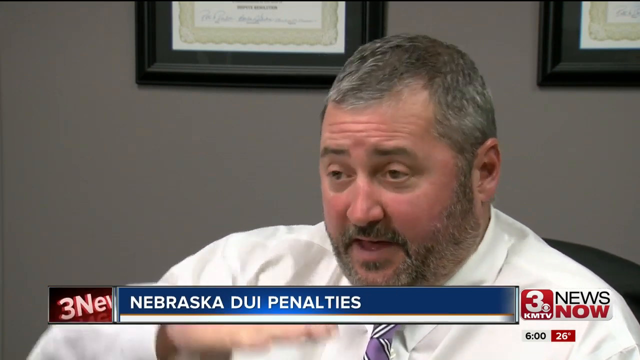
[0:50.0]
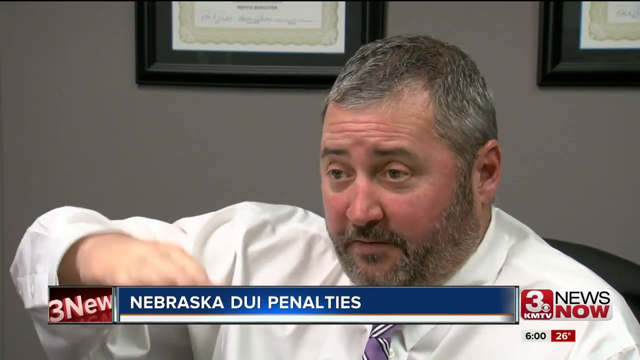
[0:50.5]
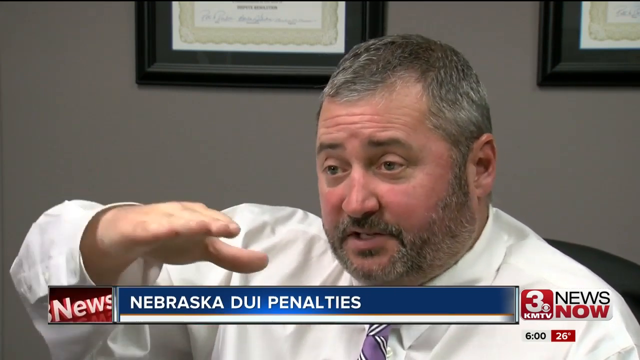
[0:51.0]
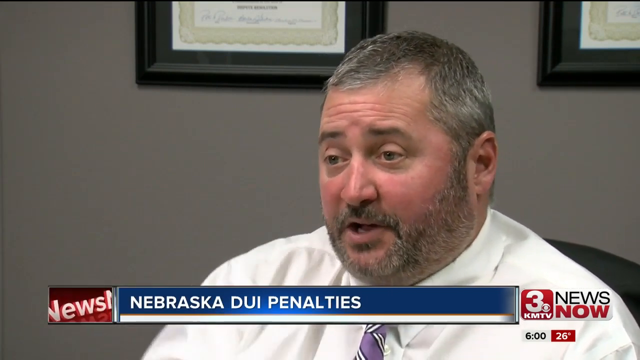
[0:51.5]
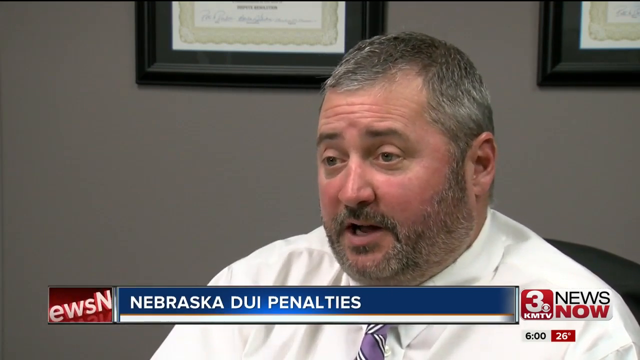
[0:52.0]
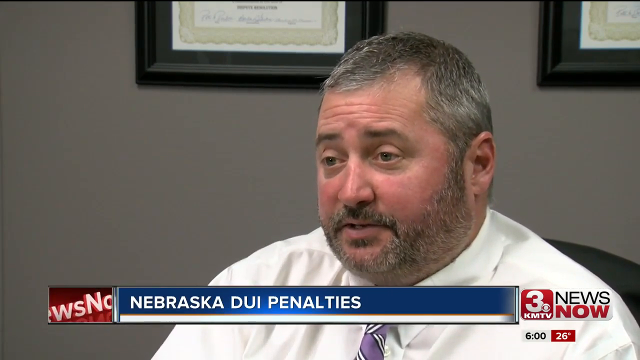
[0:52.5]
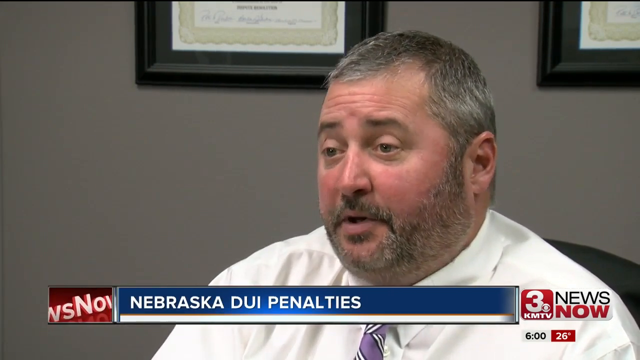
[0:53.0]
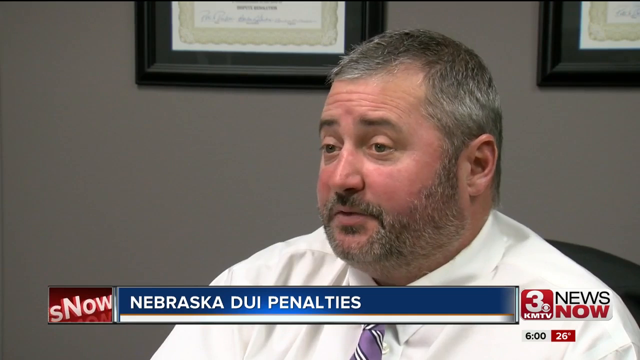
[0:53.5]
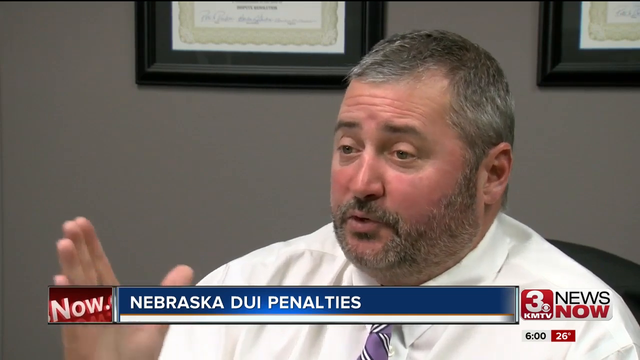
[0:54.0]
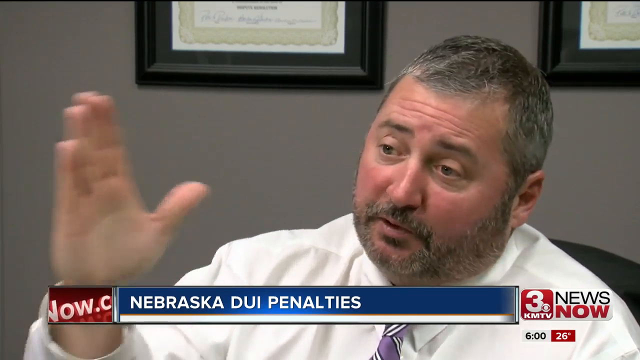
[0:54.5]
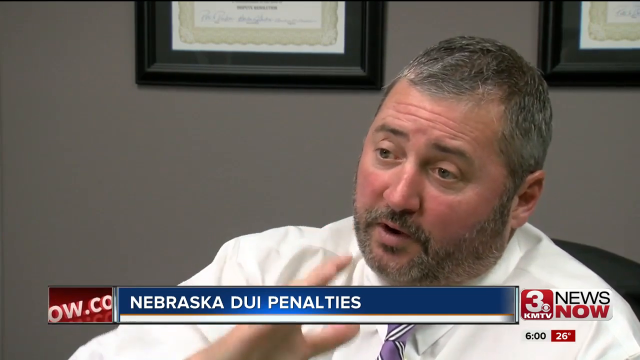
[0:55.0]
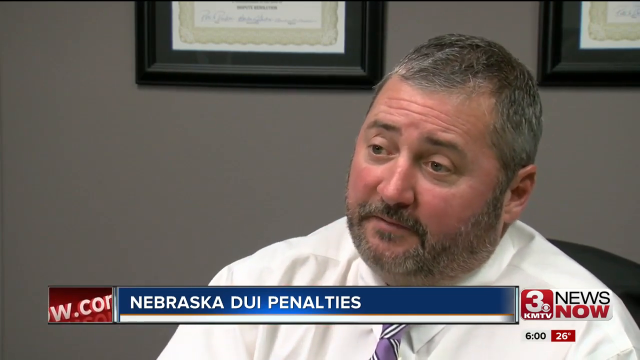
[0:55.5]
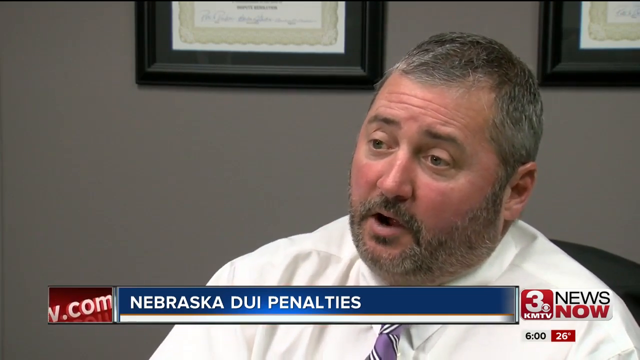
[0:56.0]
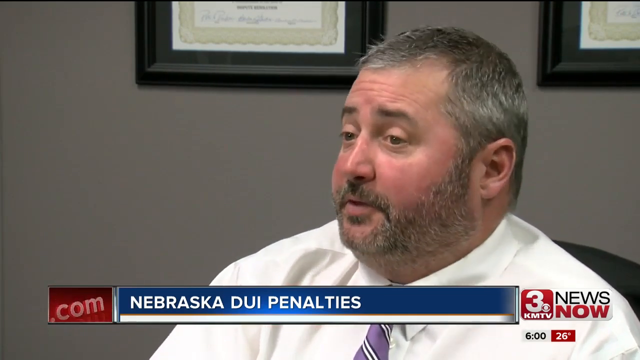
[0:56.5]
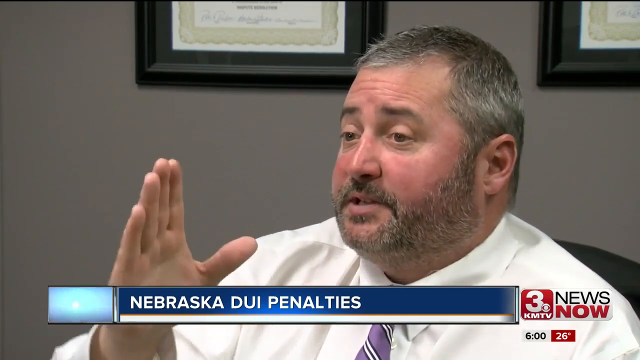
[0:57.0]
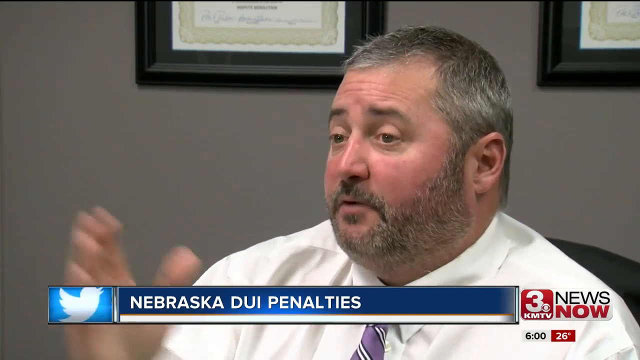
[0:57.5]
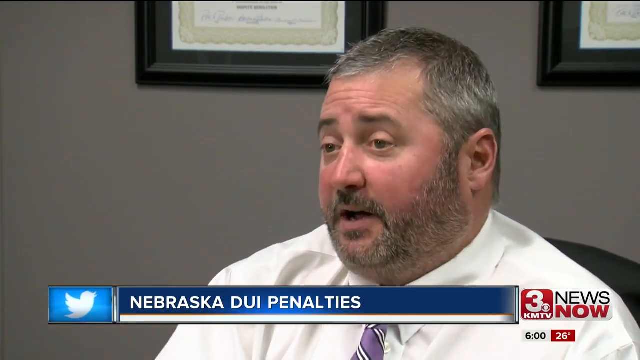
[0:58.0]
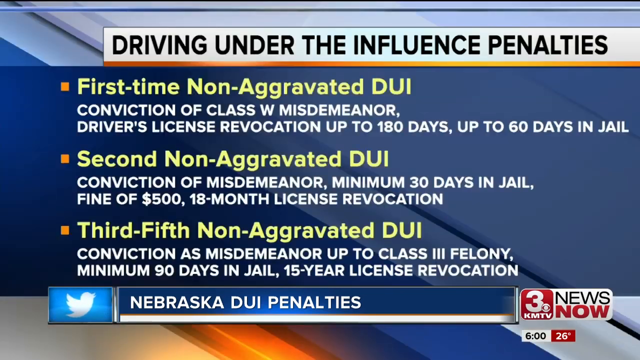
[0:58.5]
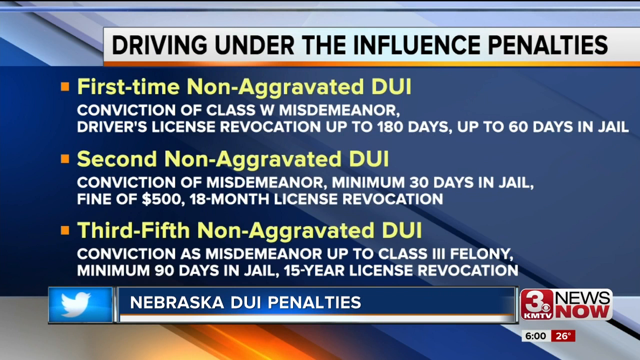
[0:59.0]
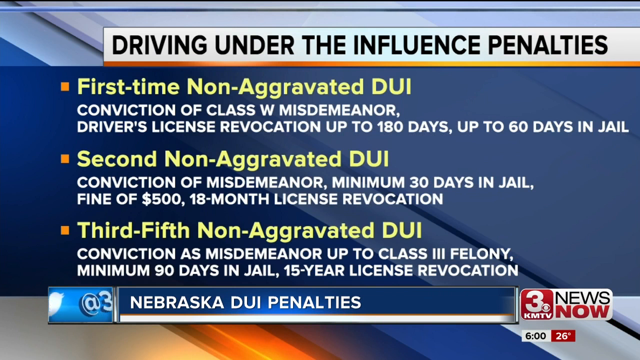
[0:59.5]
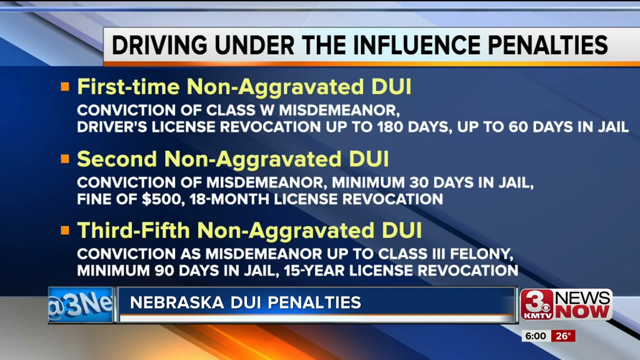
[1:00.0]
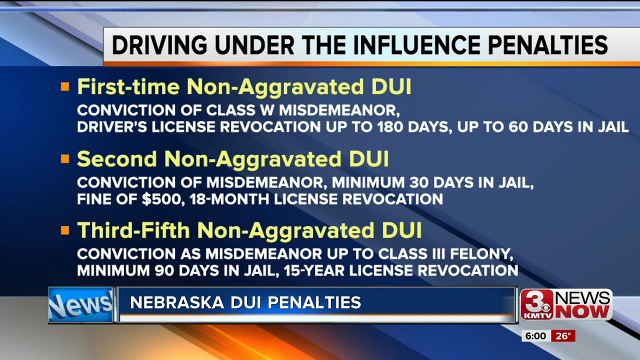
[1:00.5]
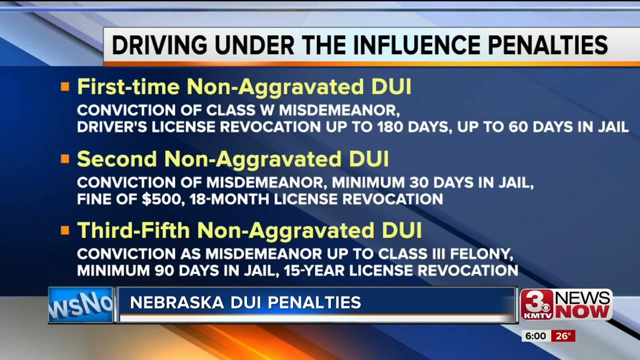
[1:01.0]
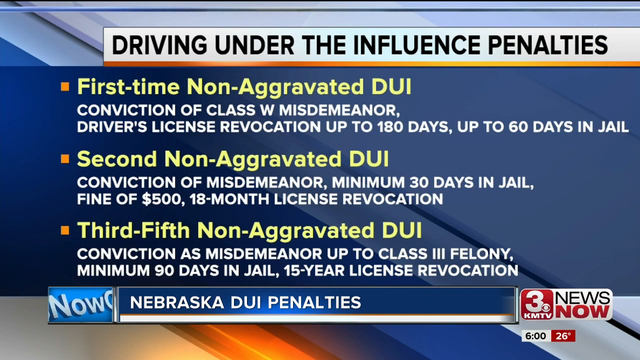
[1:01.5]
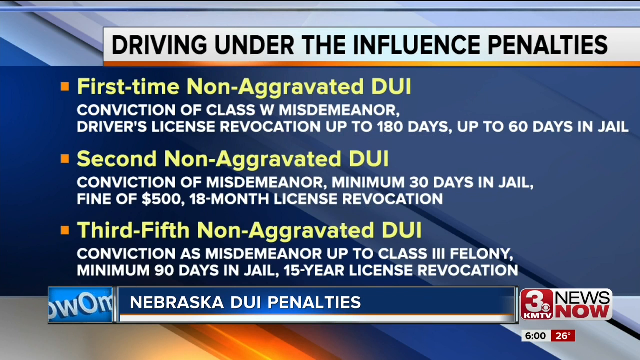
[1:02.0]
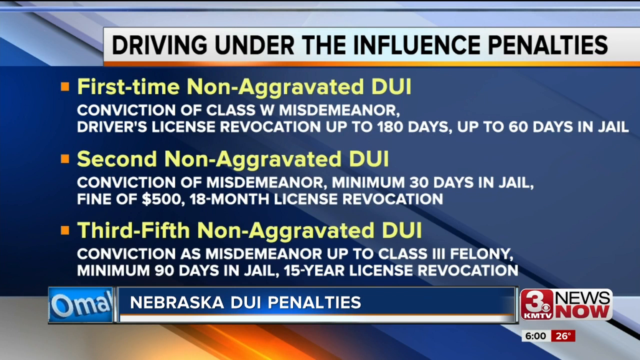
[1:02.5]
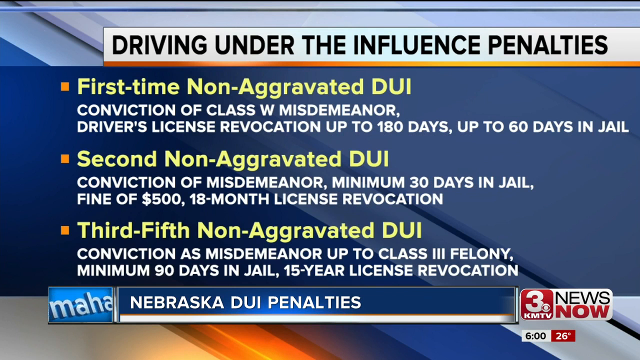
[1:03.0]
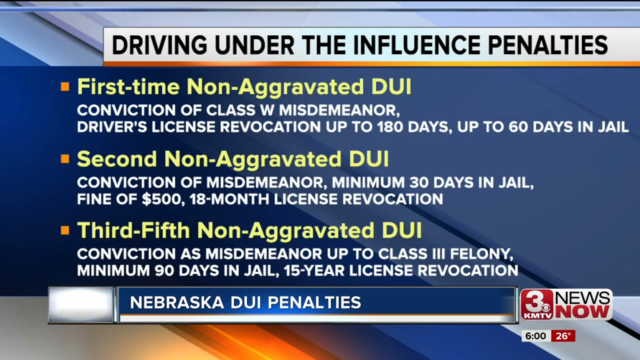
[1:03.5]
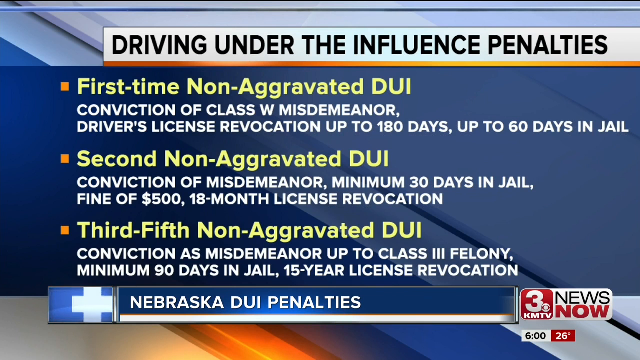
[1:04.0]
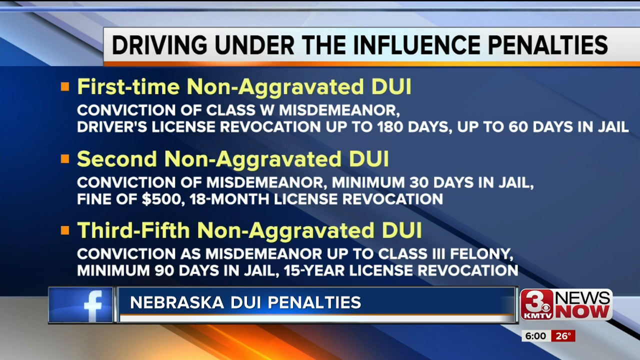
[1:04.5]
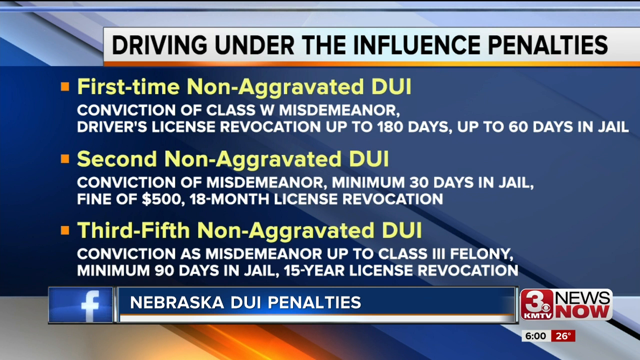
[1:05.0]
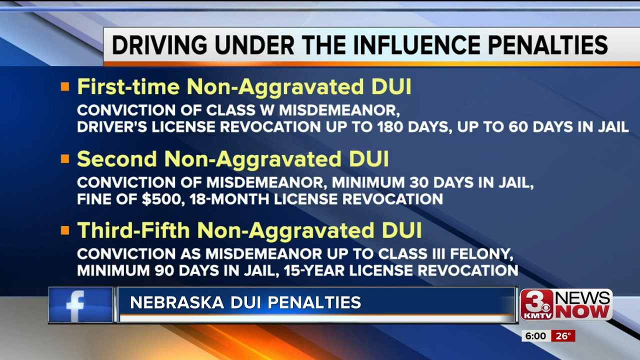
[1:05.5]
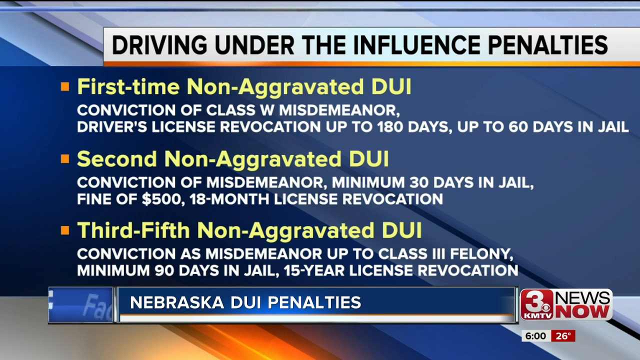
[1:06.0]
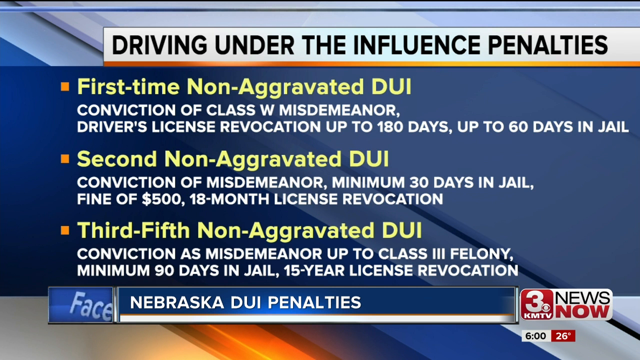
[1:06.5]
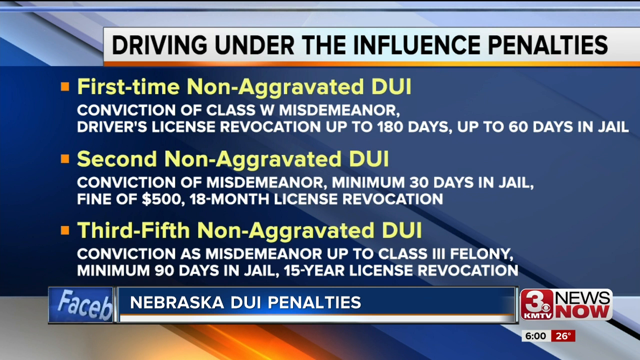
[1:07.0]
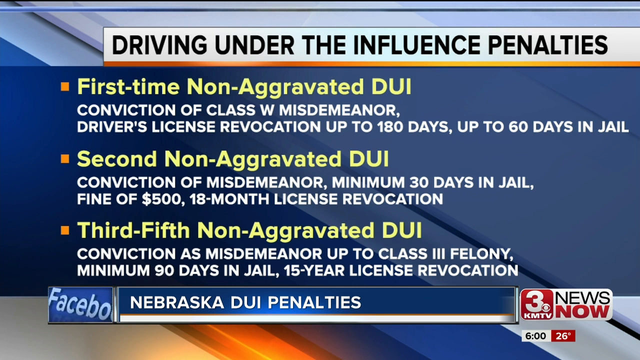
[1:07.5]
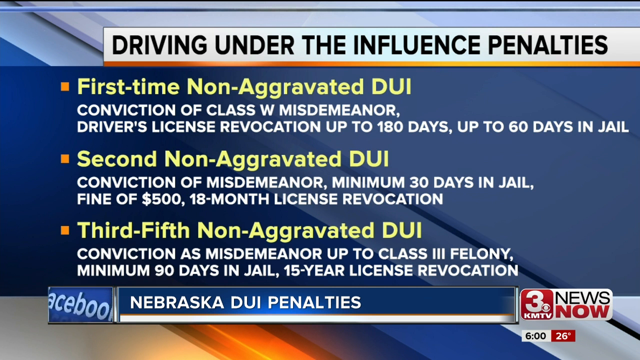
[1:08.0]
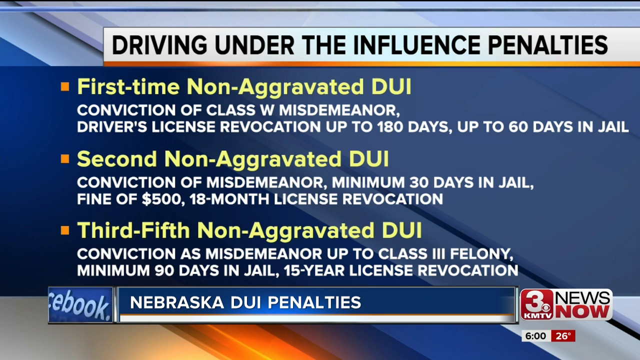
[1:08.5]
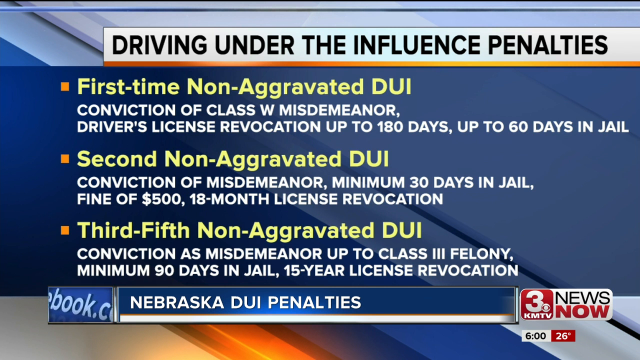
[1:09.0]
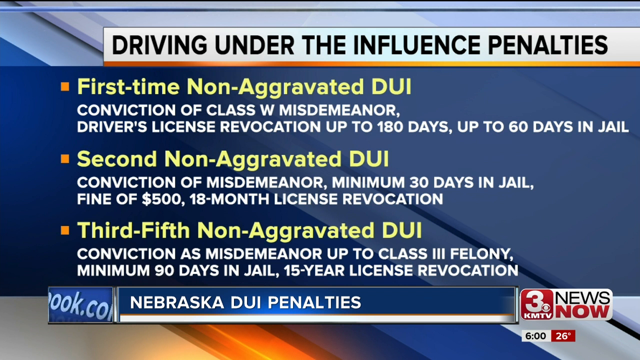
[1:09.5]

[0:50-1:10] The interview with defense attorney Michael Fitzpatrick continues. He gestures to the interviewer, sort of raising his right hand upwards, then moves his right hand from side to side. A summary of Nebraska's penalties for driving under the influence follows: a first-time non-aggravated offense is a class W misdemeanor, meaning loss of license for up to 180 days and up to 60 days in jail; a second offense brings a minimum of 30 days in jail, a $500 fine and an 18-month license revocation; a third offense may be treated as a third class felony, with at least 90 days in jail and loss of the driving license for 15 years.